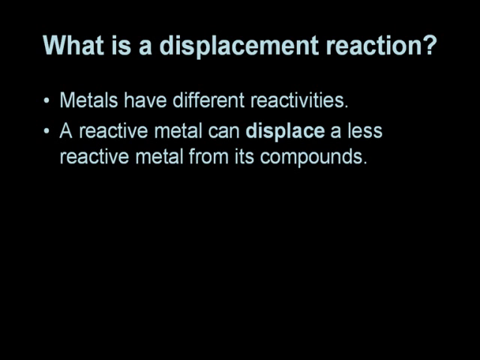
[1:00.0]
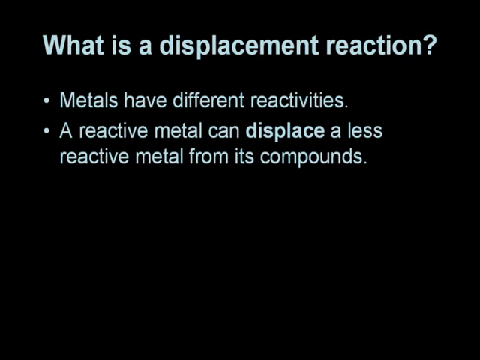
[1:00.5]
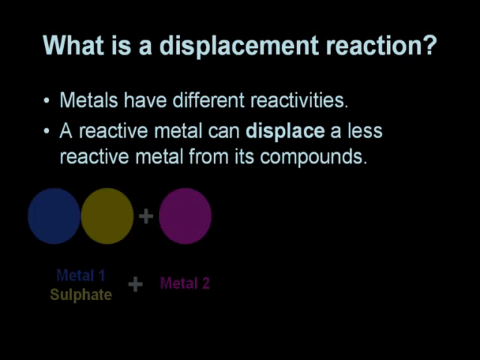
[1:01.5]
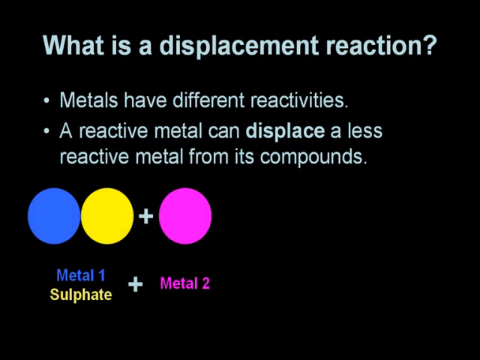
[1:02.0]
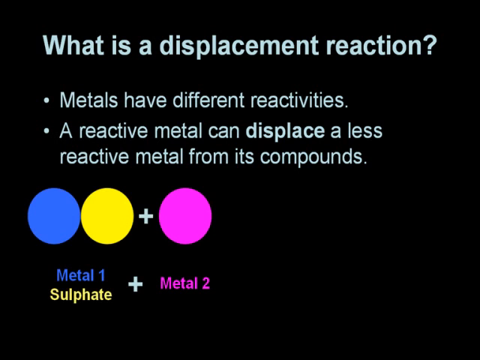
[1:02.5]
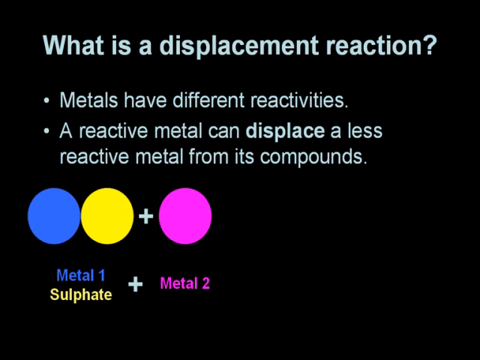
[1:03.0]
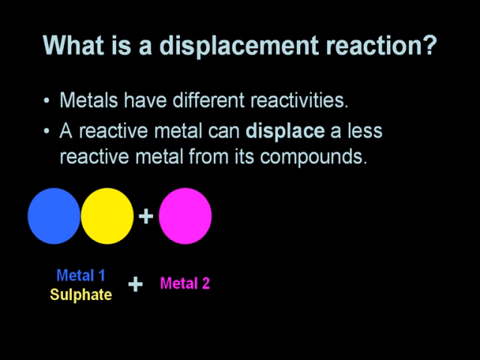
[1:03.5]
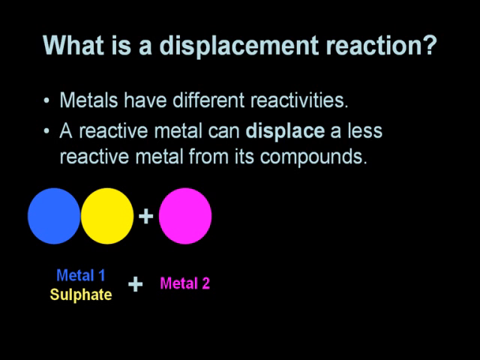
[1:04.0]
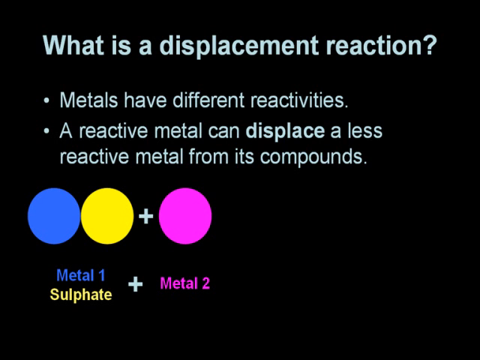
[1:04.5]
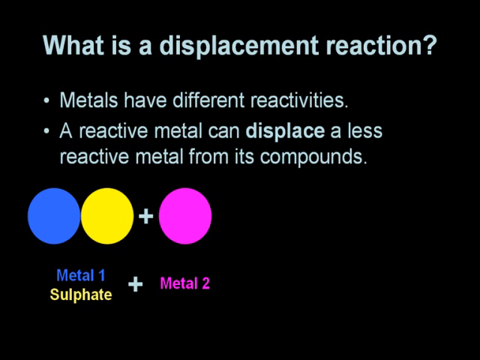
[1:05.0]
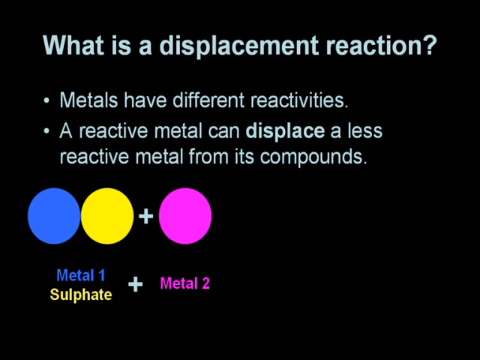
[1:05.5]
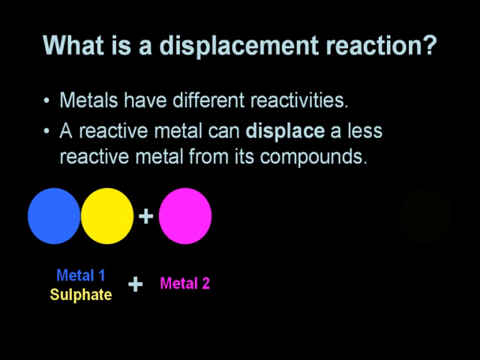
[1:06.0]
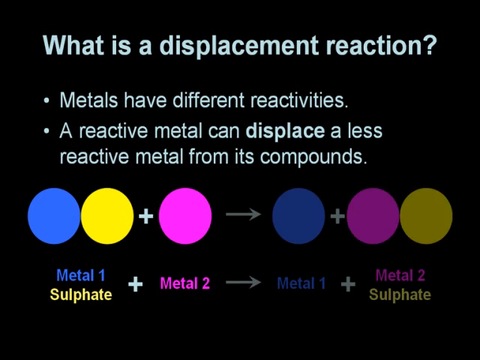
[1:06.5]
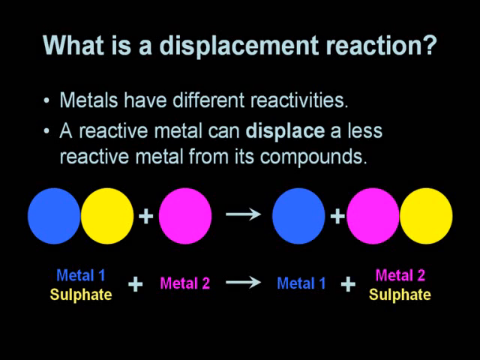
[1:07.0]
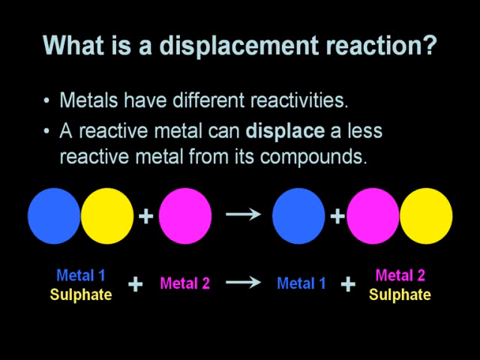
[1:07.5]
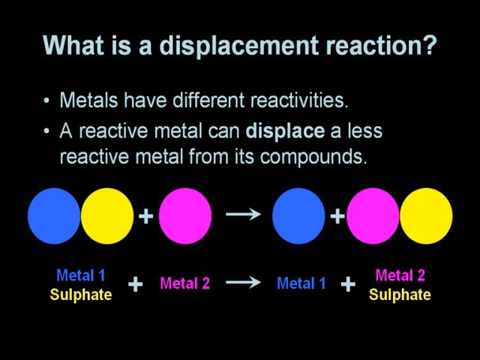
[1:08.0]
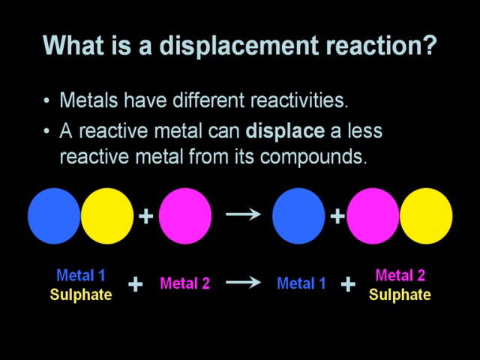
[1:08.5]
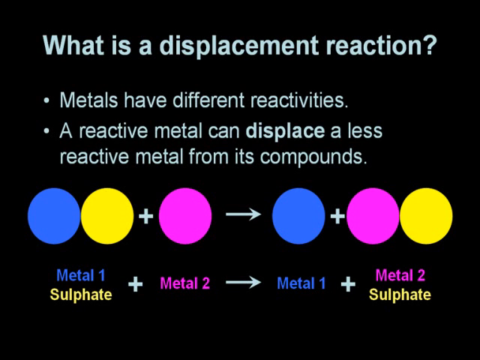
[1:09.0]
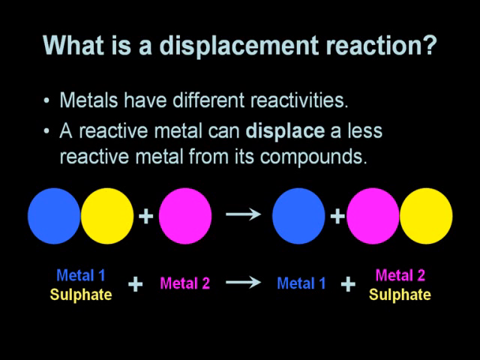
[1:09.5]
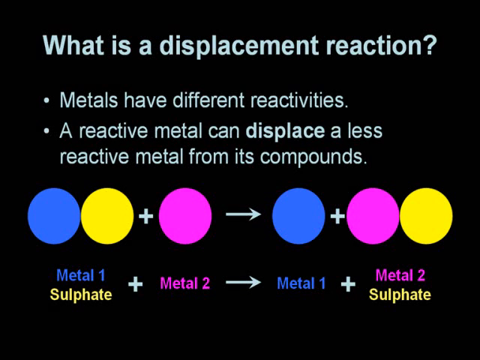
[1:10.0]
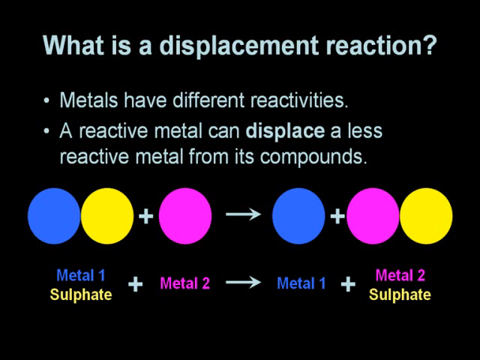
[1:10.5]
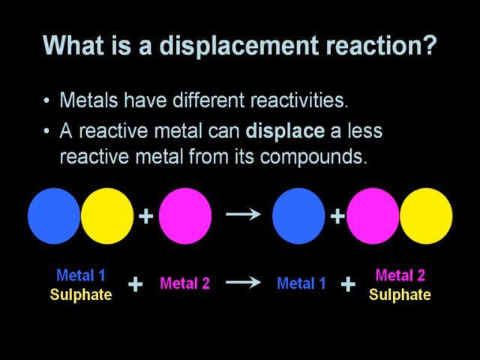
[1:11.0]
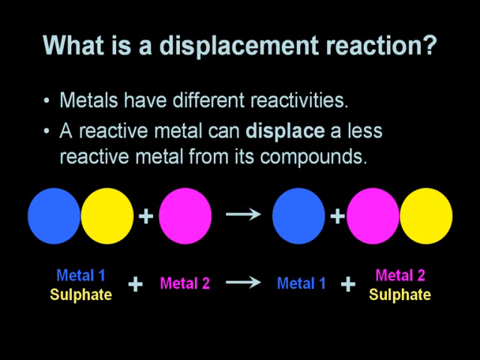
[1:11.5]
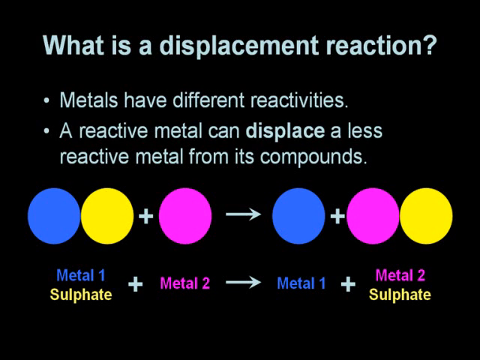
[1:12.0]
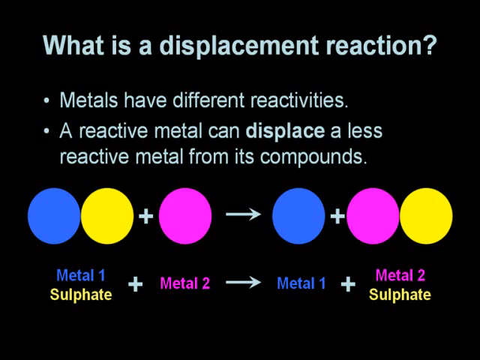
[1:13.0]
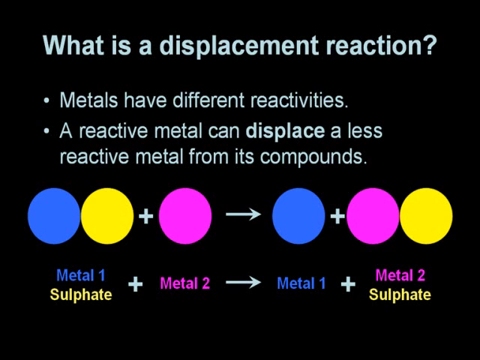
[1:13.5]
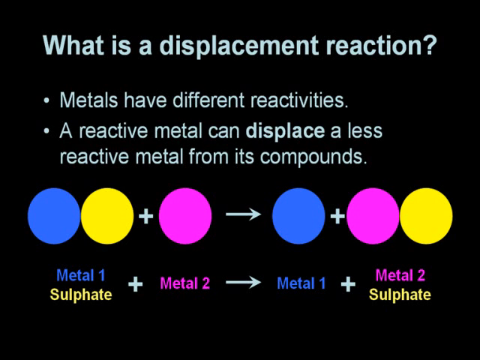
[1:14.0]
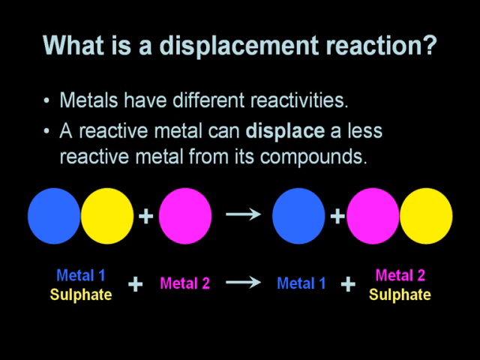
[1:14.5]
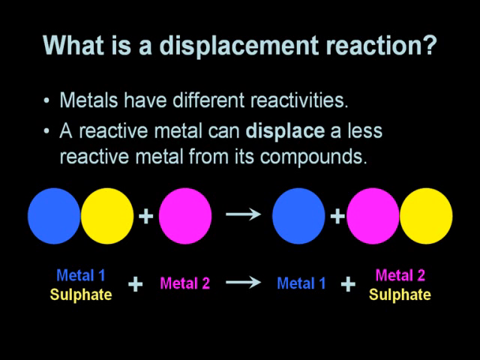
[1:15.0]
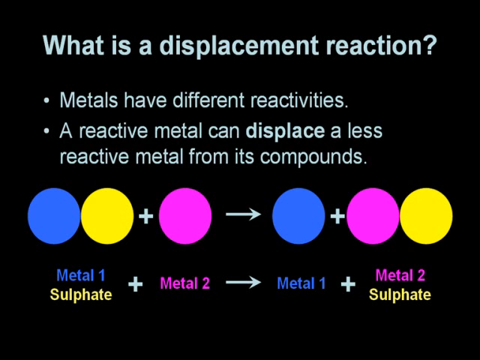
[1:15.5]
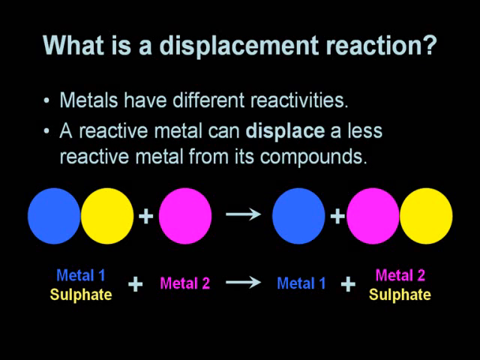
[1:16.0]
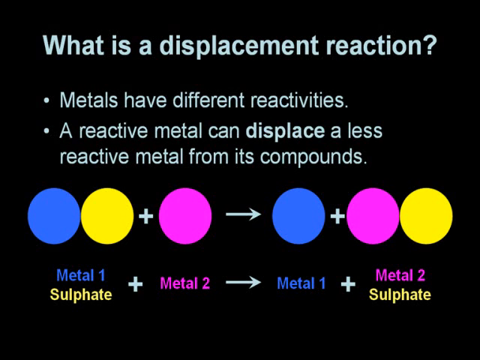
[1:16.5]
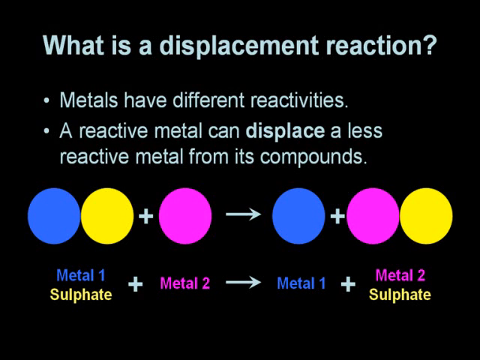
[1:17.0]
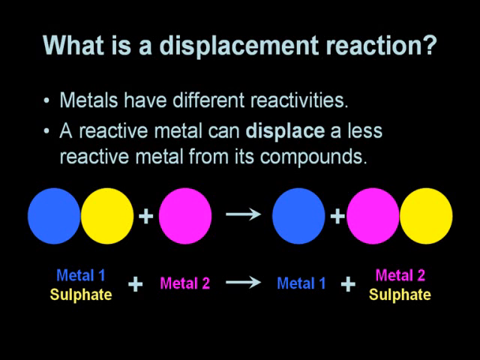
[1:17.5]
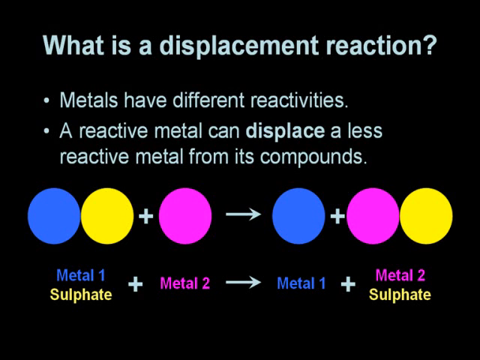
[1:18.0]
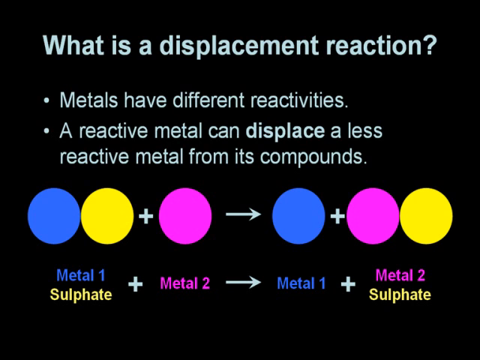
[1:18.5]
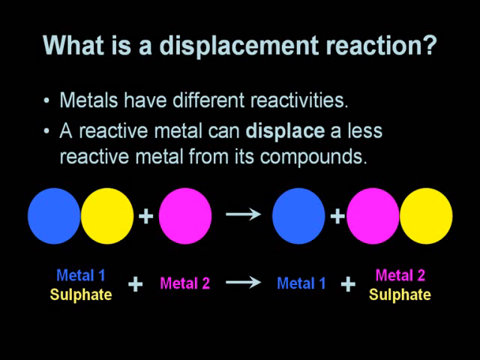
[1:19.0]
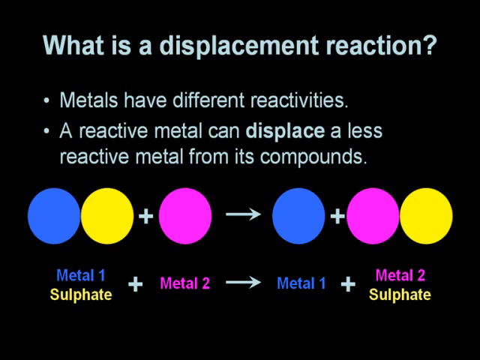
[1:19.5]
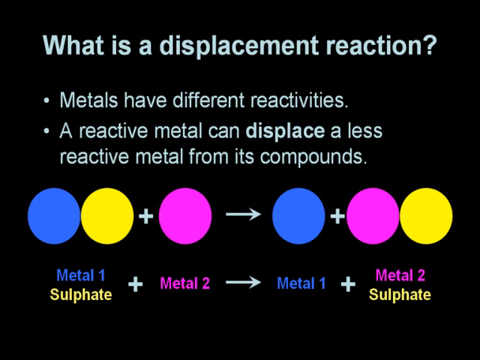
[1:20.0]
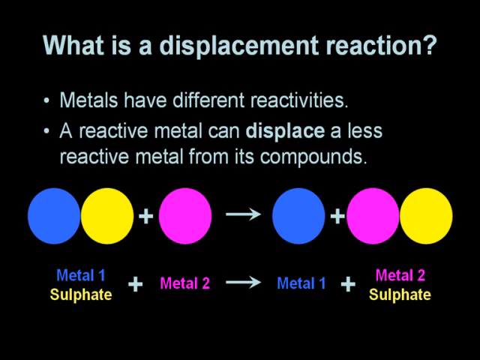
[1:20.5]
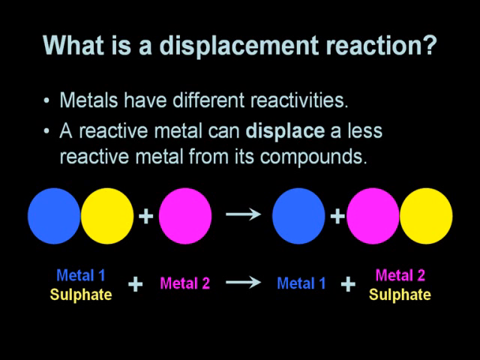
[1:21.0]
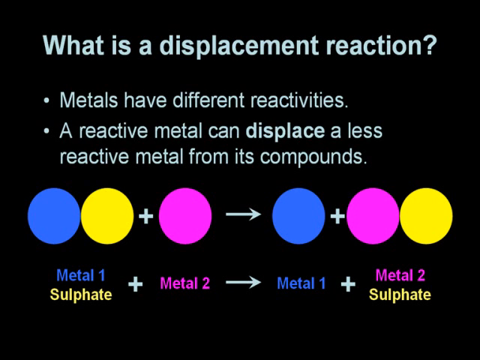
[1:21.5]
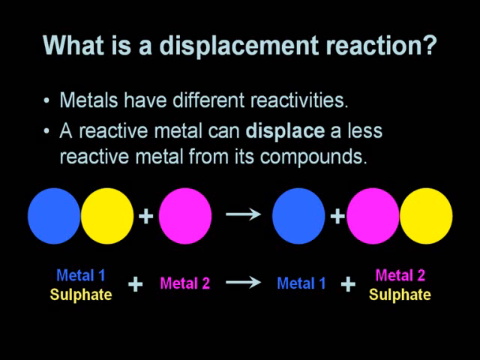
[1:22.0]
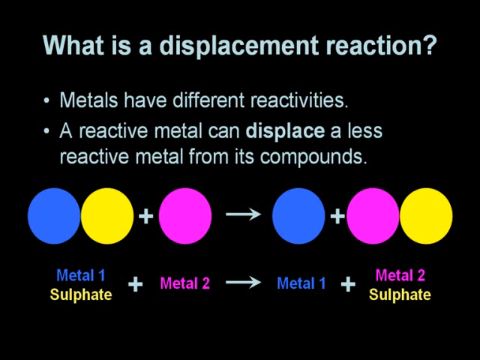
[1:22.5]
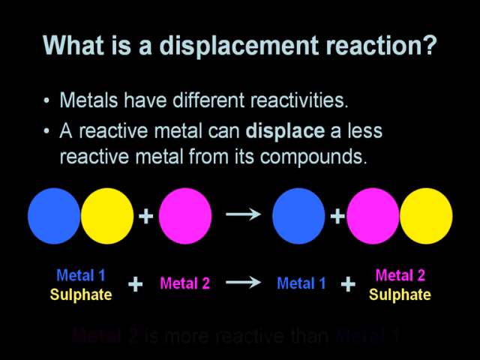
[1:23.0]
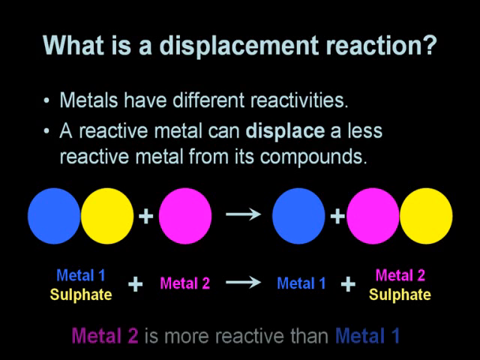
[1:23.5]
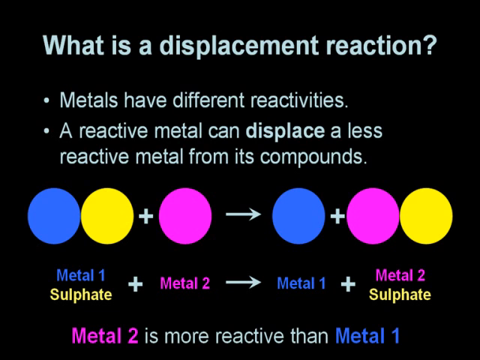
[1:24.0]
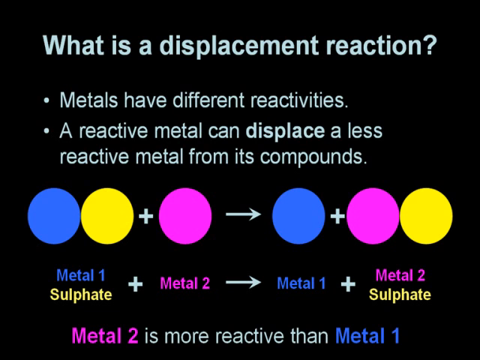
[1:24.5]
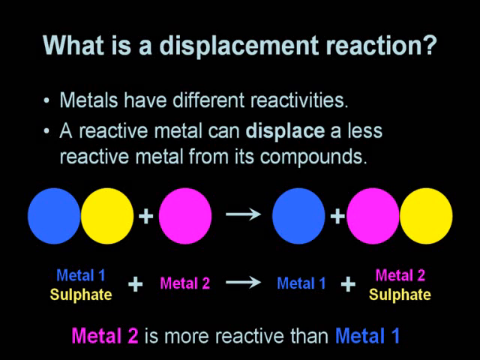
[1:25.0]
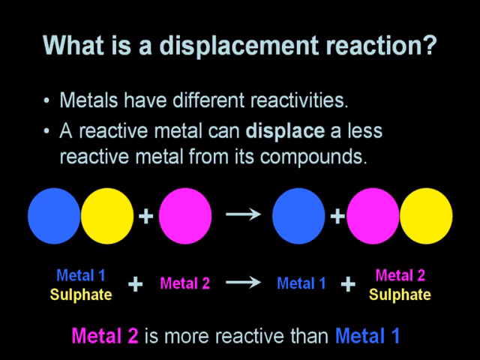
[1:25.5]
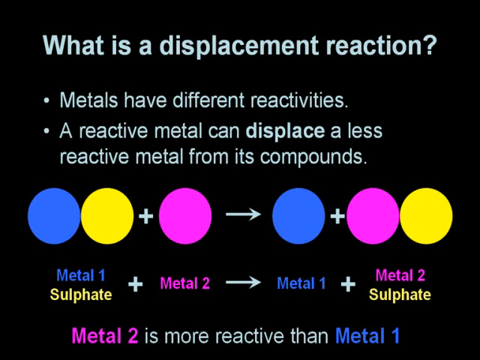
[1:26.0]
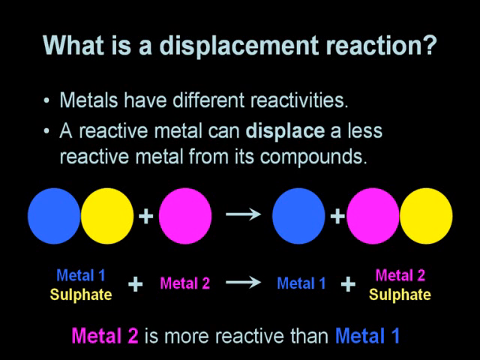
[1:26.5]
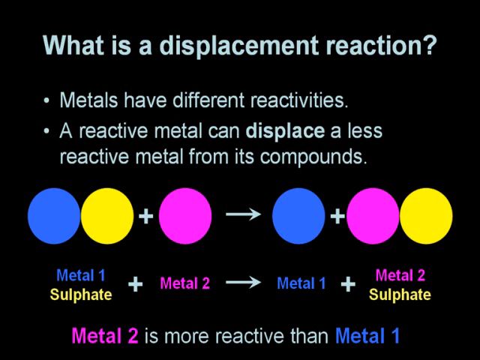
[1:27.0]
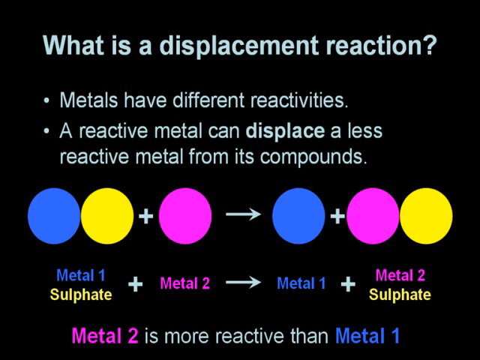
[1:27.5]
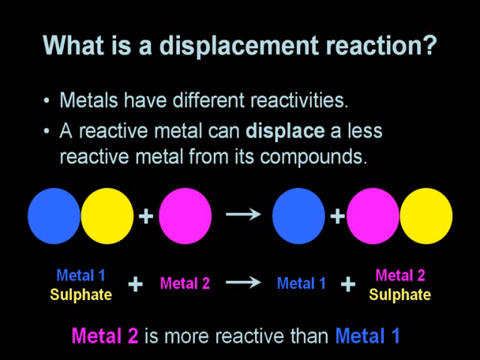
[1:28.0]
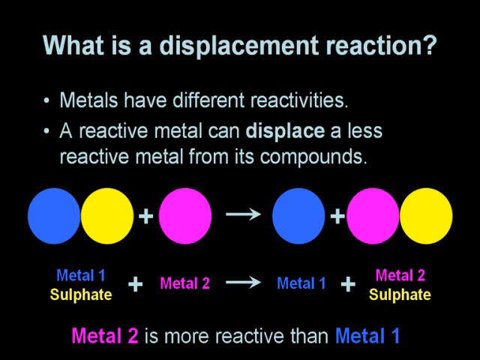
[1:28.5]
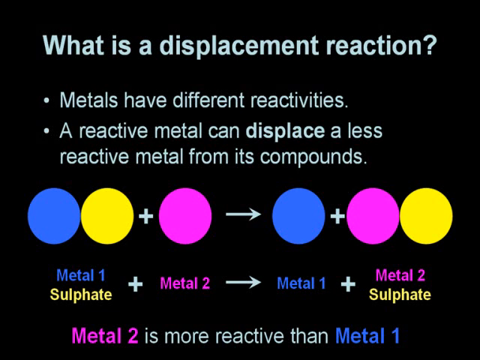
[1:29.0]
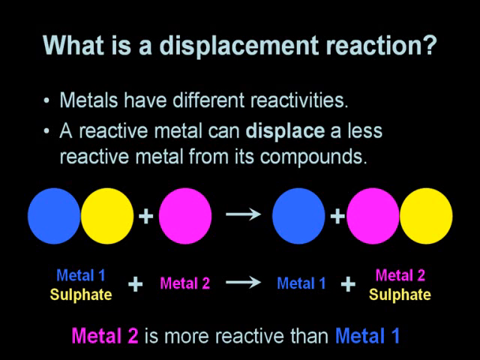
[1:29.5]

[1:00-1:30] The slide reads "what is a displacement reaction?" across the top of a black background. Below are bullet points: the first says "metals have different reactivities", and the second refers to a reactive metal and "a less reactive metal from its compounds". An image at the bottom illustrates this: a blue circle right next to a yellow circle, a plus sign, and then a purple circle. Underneath, "metal one" is written in blue, "sulfate" underneath that in yellow, plus "metal two" in purple. An arrow leads from those circles to the right-hand side, where there is a blue circle, a plus sign, and a purple circle and a yellow circle right next to each other. Underneath that is blue "metal one" plus purple "metal two", and underneath that, yellow "sulfate".